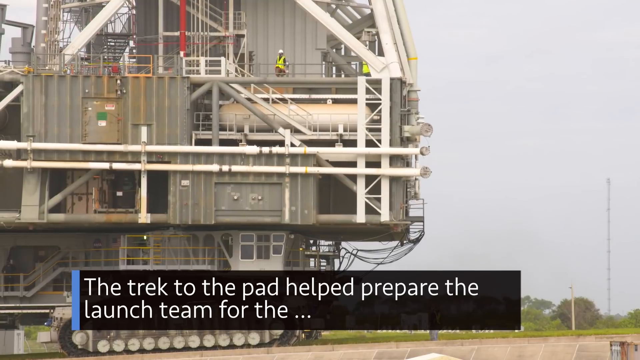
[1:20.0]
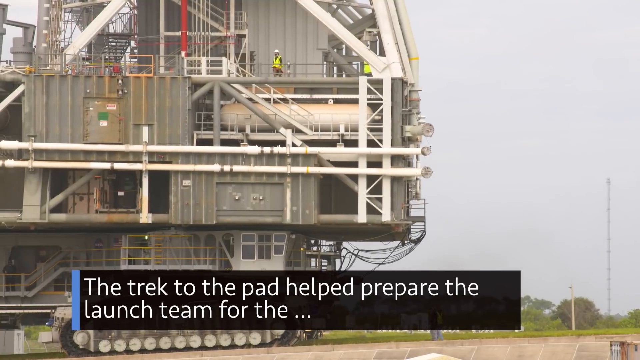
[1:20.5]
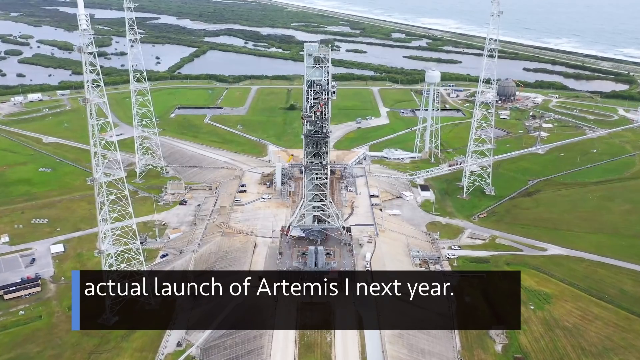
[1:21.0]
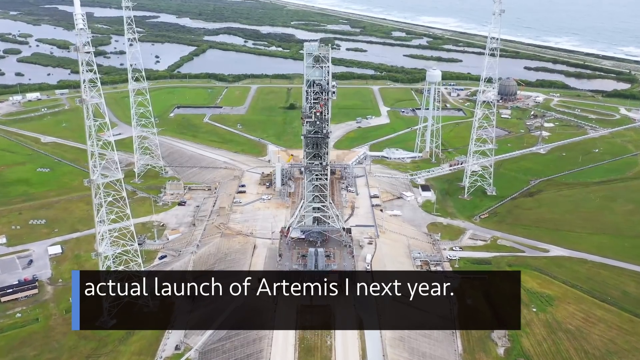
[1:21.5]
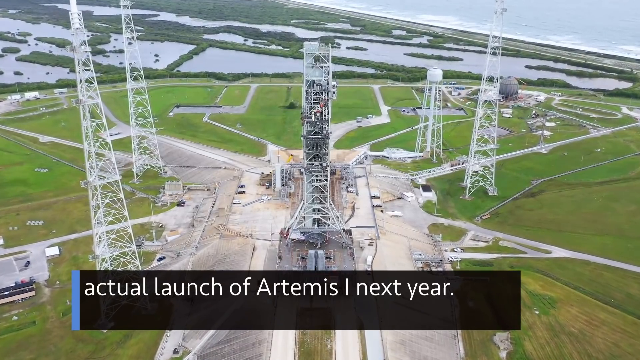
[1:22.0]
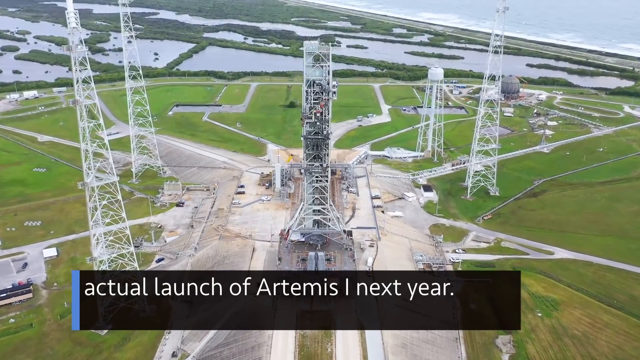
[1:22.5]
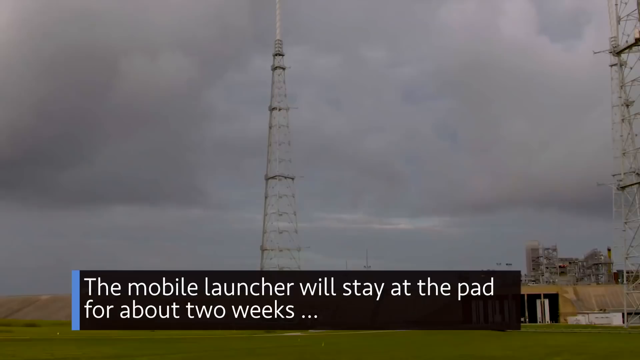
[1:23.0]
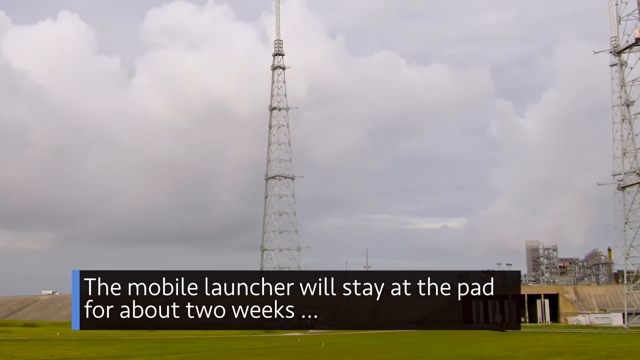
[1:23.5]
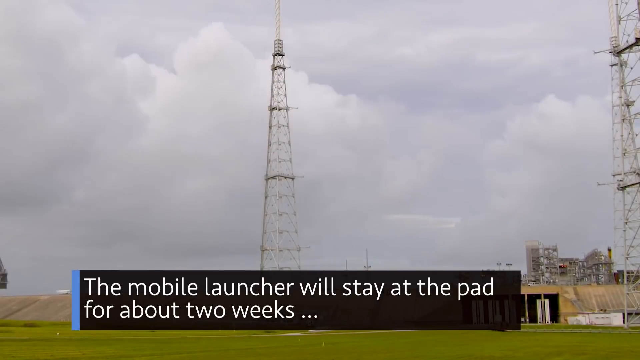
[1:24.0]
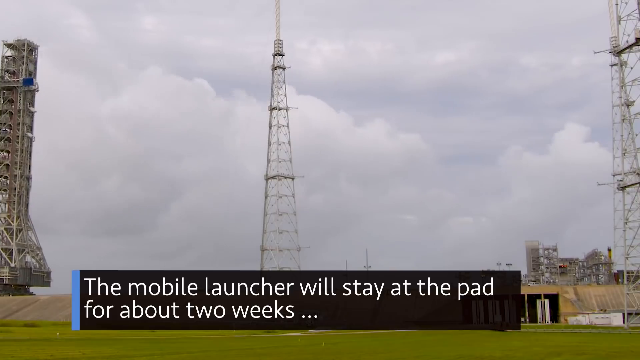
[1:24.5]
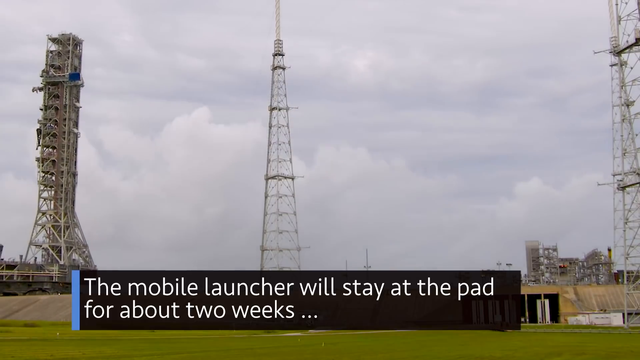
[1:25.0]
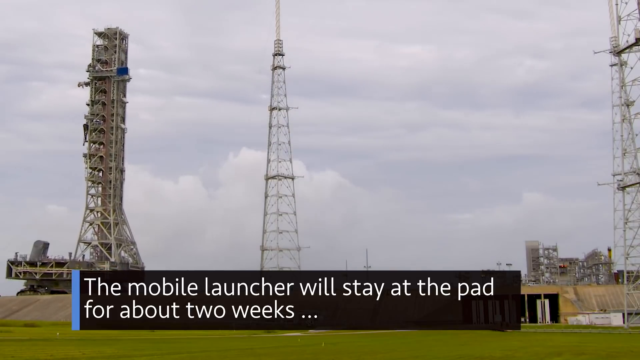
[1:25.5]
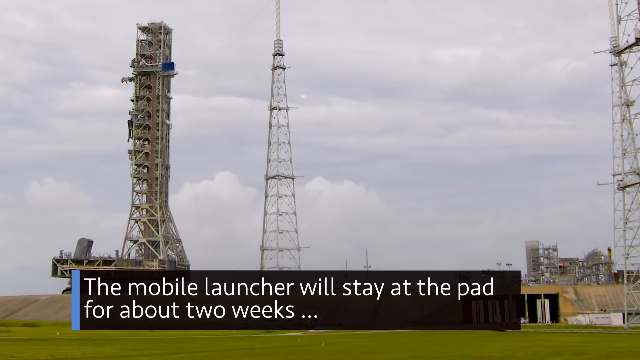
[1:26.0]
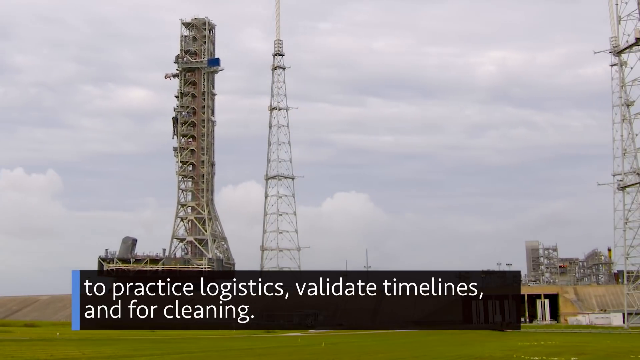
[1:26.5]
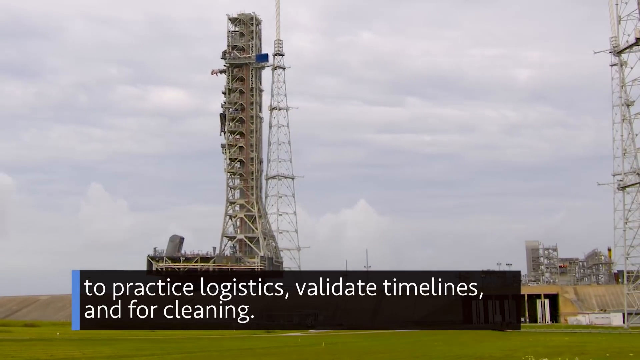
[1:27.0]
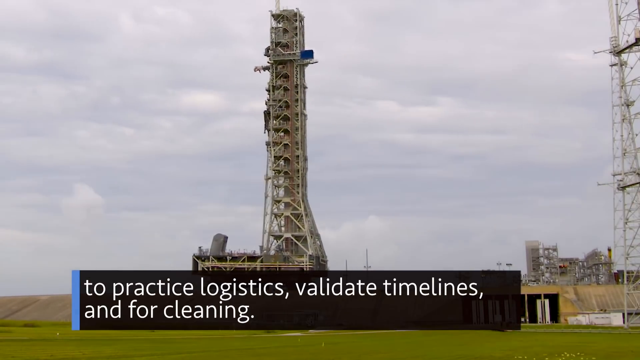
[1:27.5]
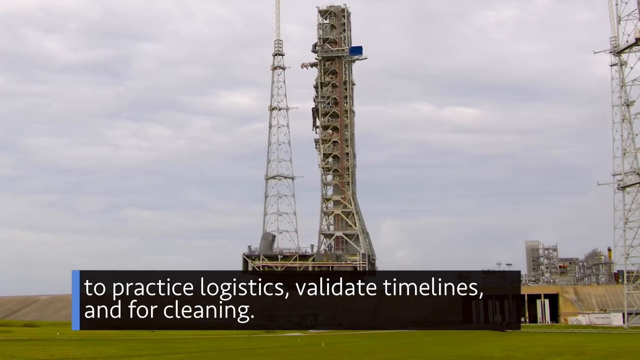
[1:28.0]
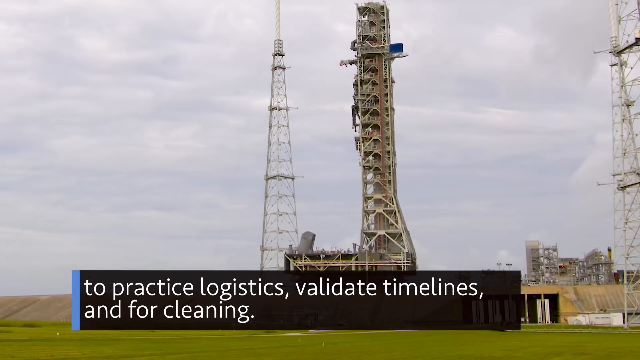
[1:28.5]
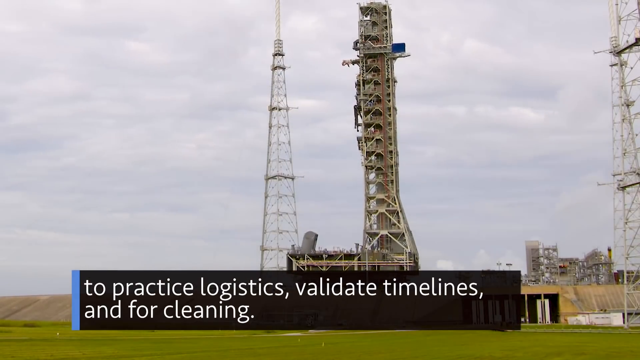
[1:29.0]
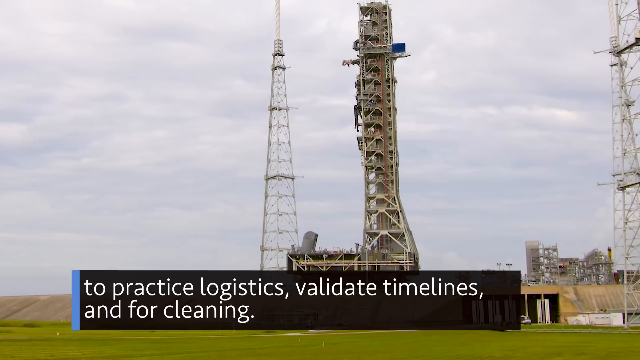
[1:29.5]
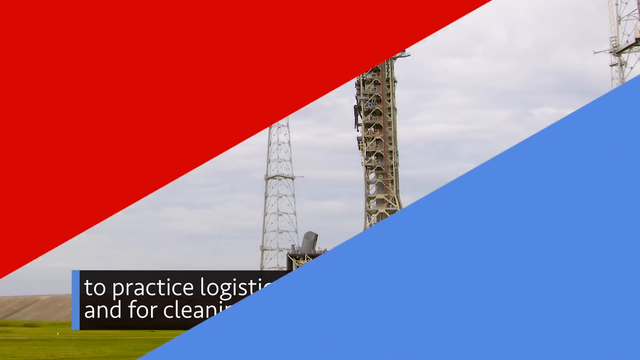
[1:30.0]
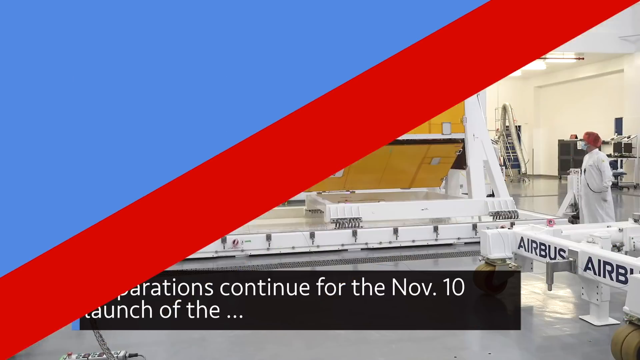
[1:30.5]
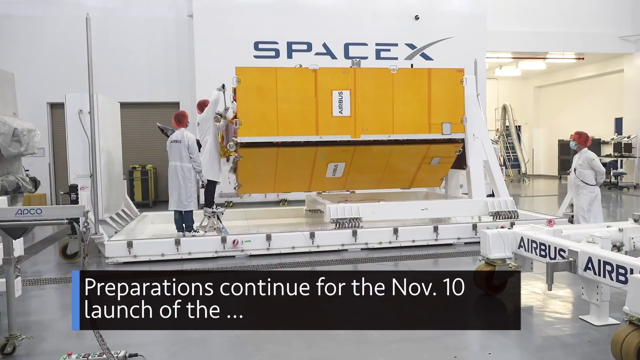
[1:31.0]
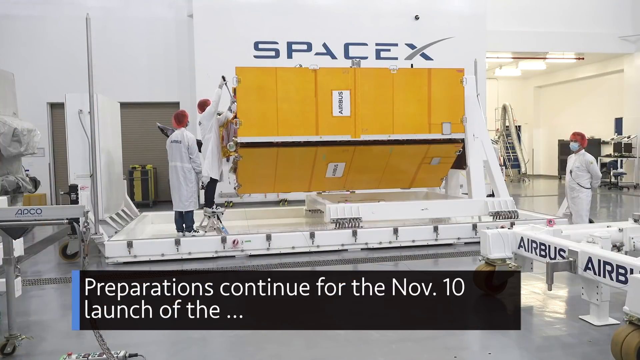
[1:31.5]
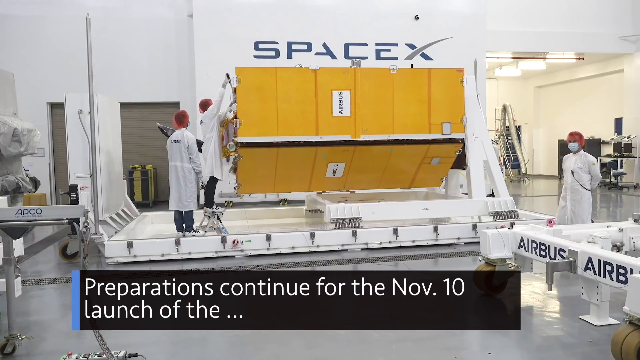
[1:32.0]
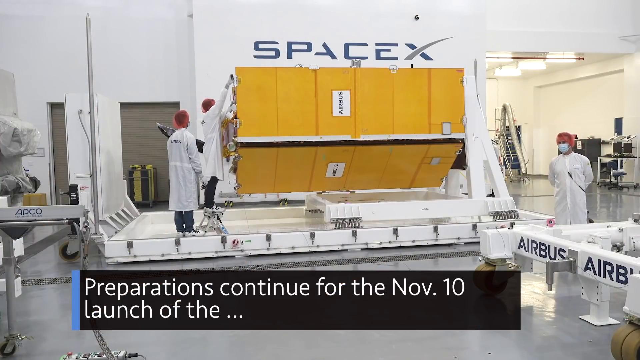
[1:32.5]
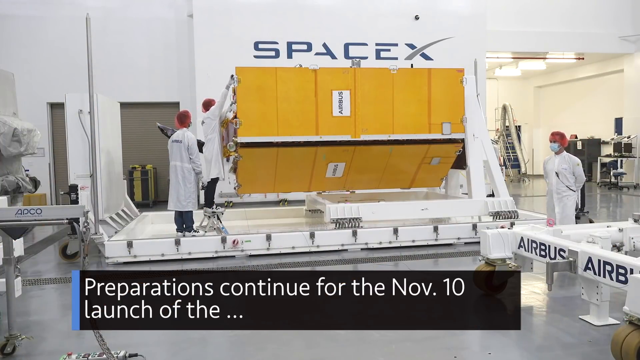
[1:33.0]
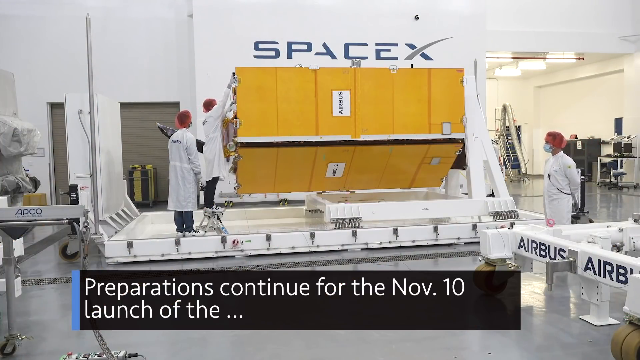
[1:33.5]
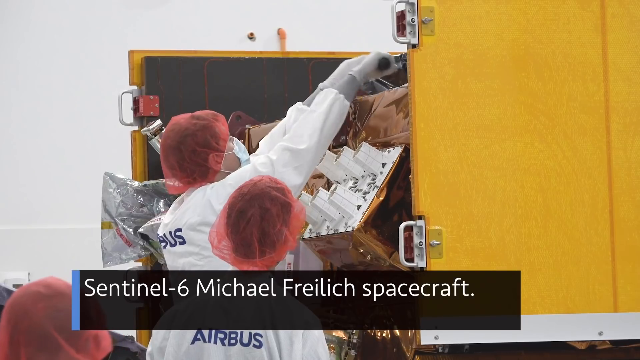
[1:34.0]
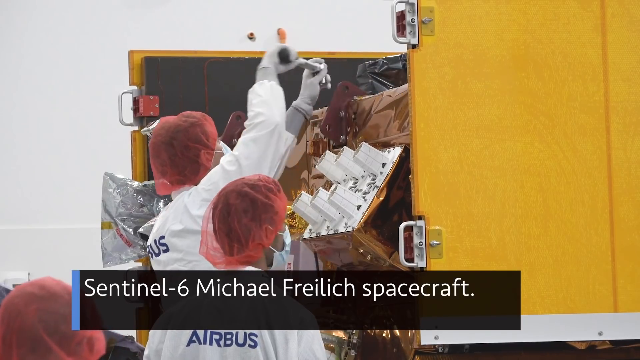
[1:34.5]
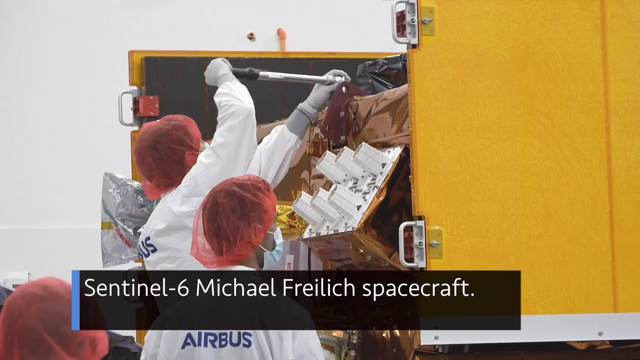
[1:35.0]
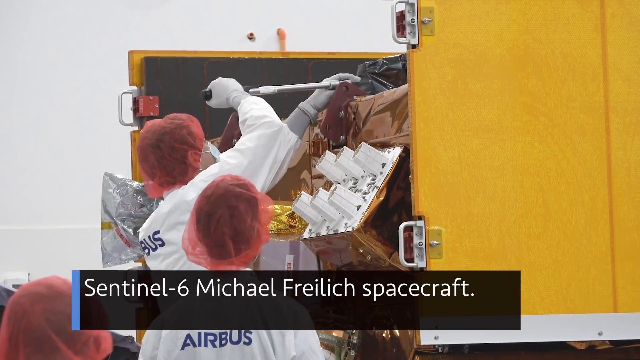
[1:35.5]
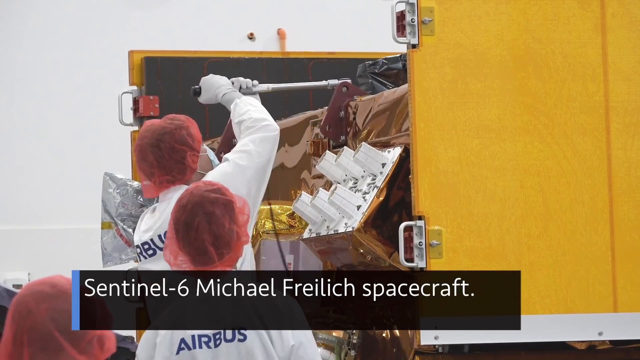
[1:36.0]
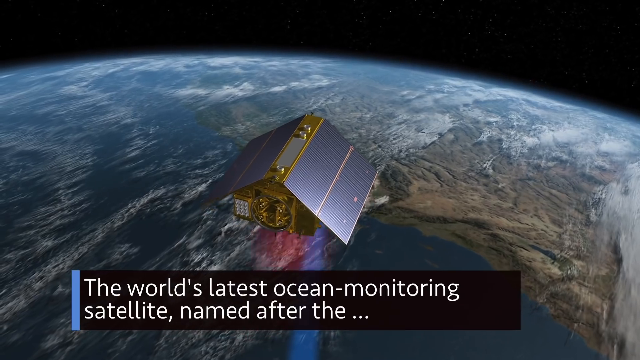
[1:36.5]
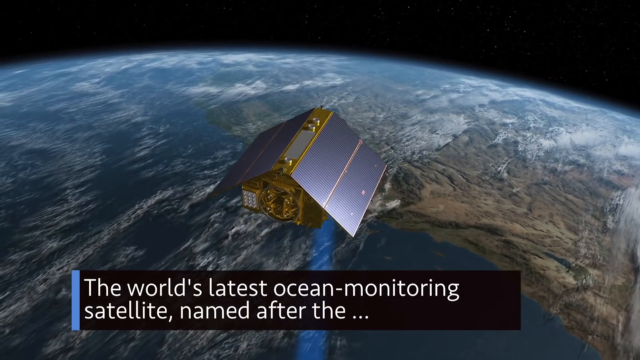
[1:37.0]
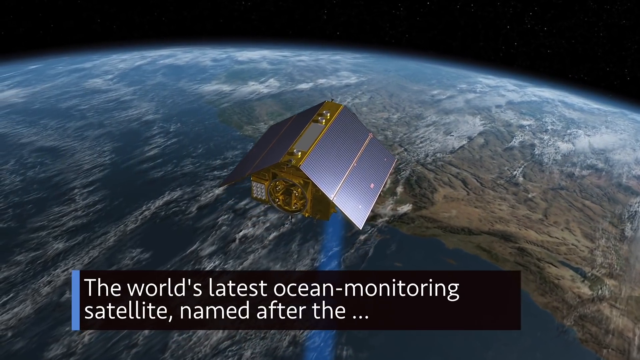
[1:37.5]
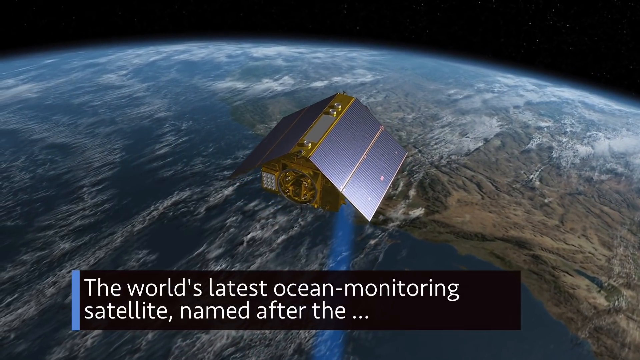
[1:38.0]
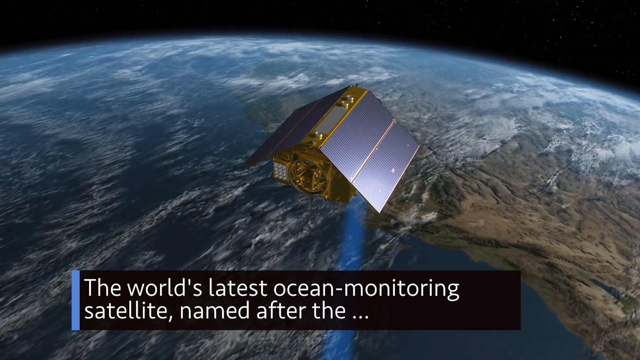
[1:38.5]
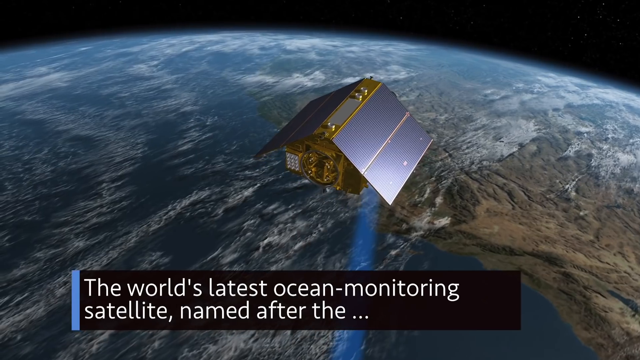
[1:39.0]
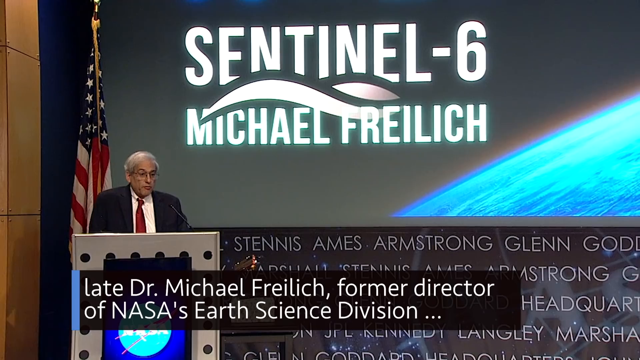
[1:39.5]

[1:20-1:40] A clearer view shows the mobile launch pad getting into position, and a few men inside a building prepare the satellite. According to the captions, the launch pad will stay there for two weeks. A yellow satellite, an ocean satellite, floats through space as the launch pad is moved. The weather above seems stormy, with many clouds rolling away. The actual launch is not until next year, with practice and preparation happening now.